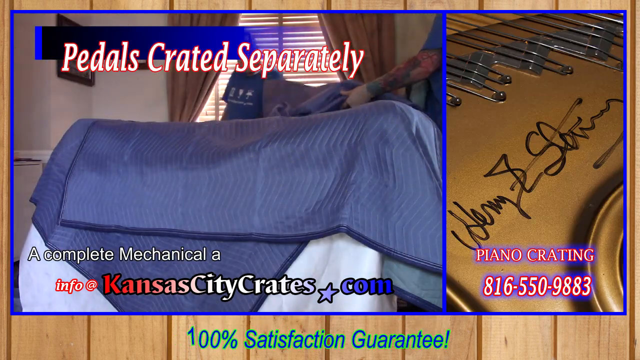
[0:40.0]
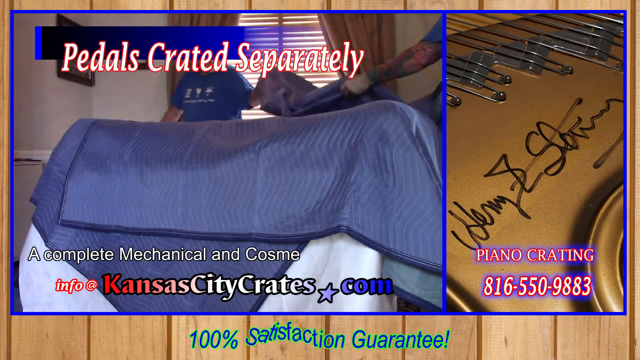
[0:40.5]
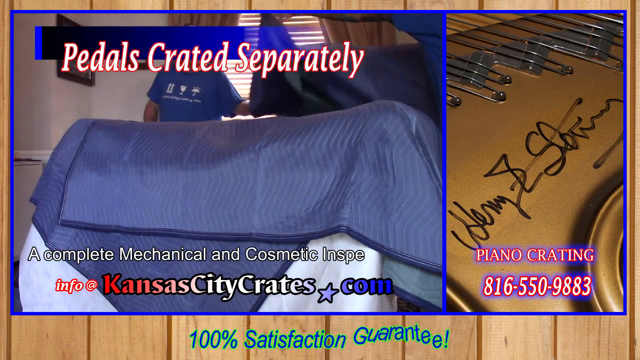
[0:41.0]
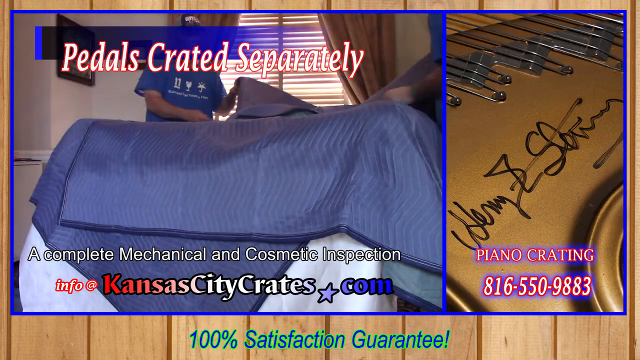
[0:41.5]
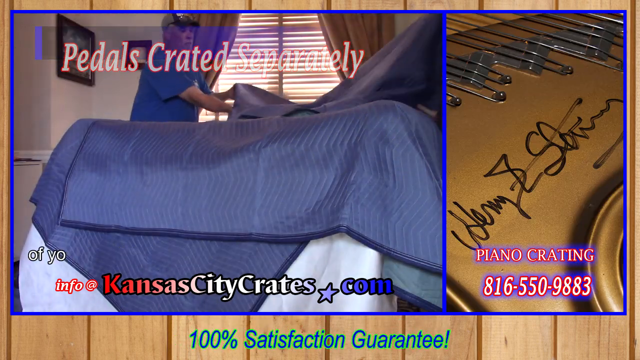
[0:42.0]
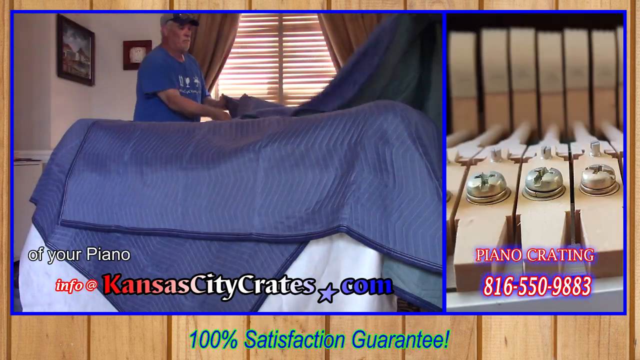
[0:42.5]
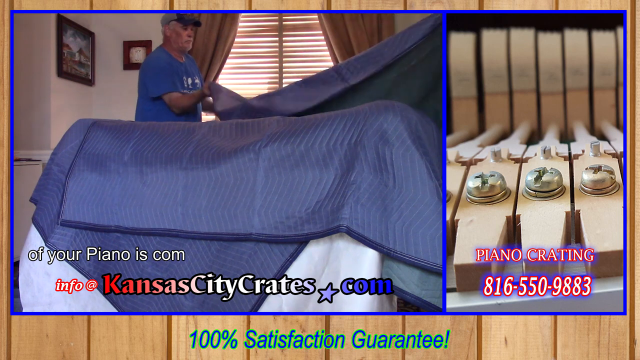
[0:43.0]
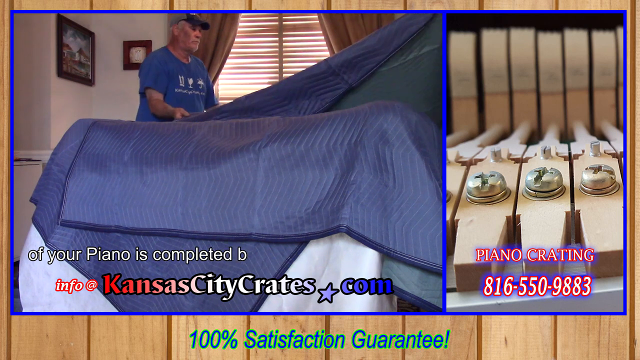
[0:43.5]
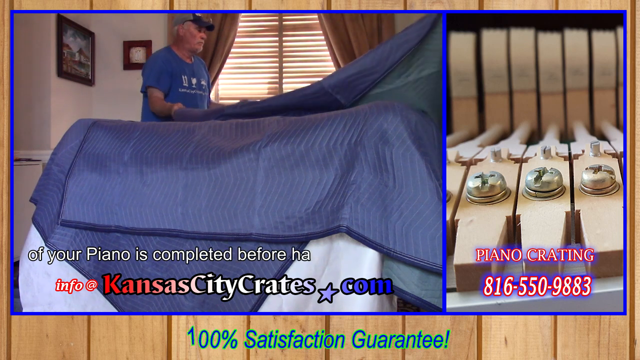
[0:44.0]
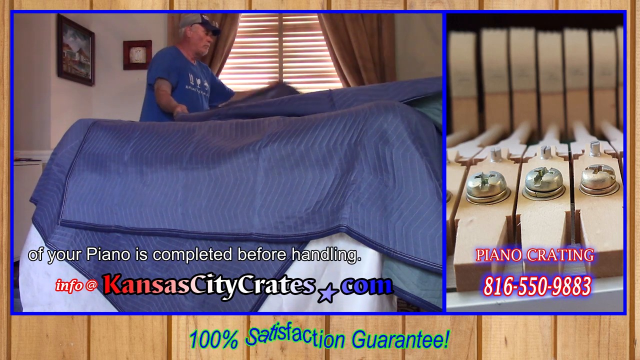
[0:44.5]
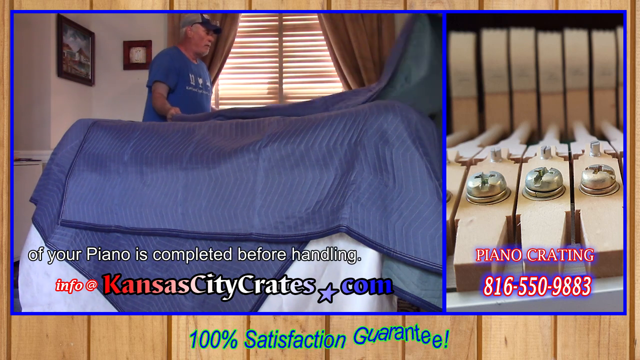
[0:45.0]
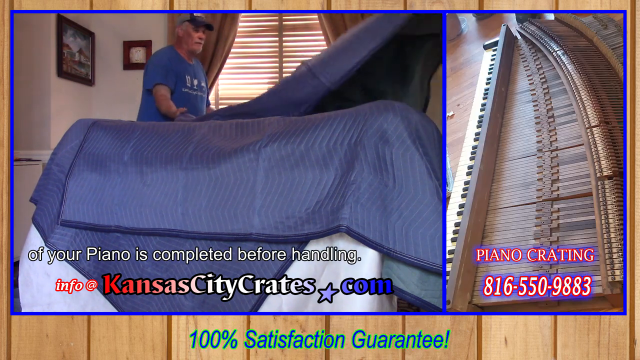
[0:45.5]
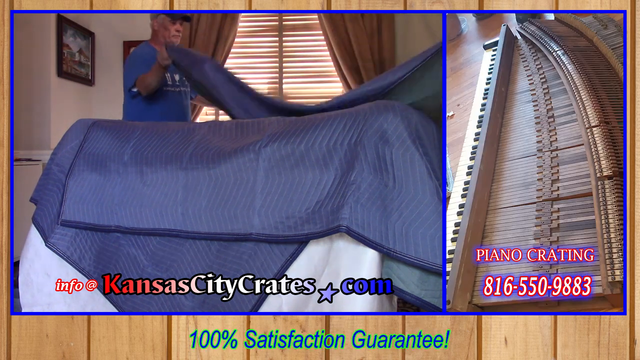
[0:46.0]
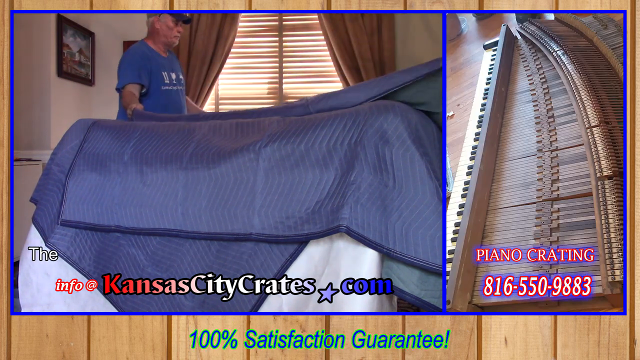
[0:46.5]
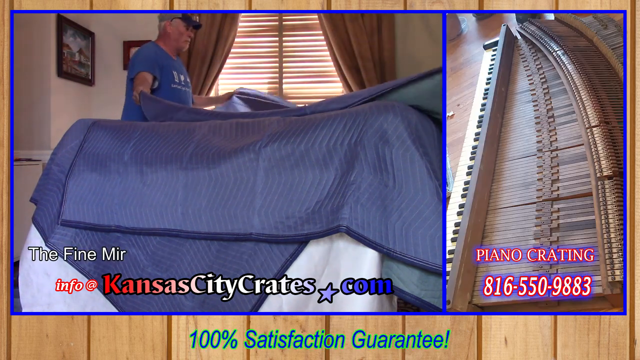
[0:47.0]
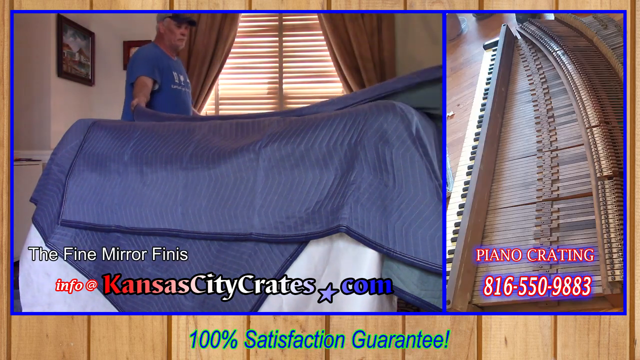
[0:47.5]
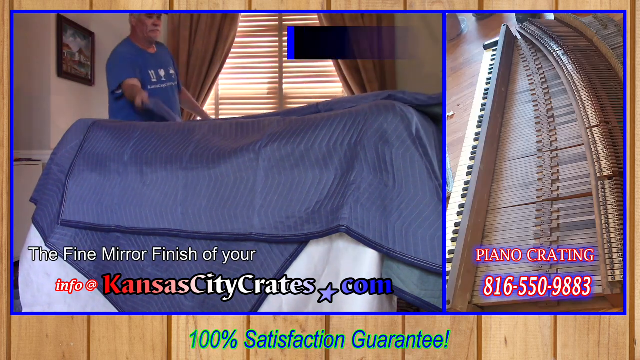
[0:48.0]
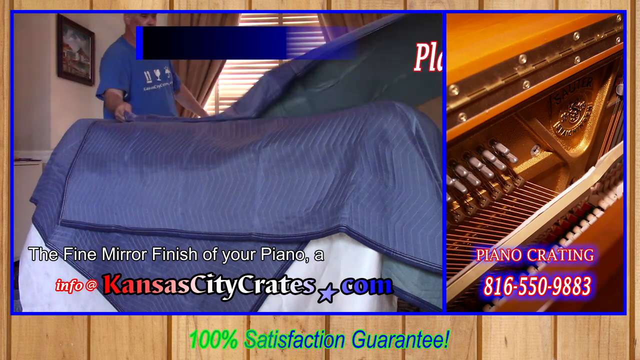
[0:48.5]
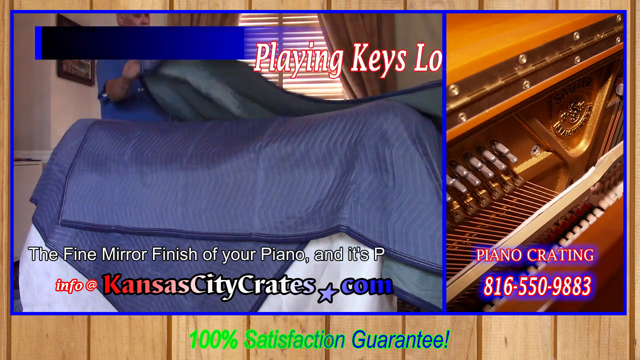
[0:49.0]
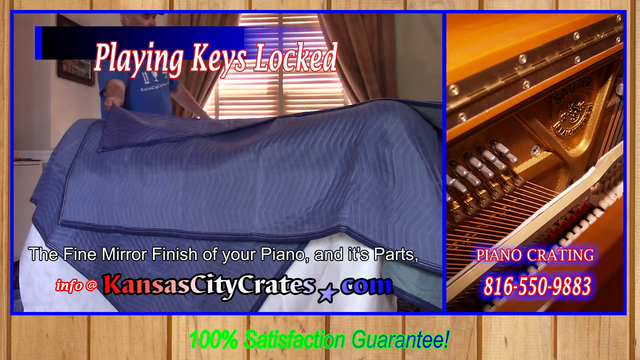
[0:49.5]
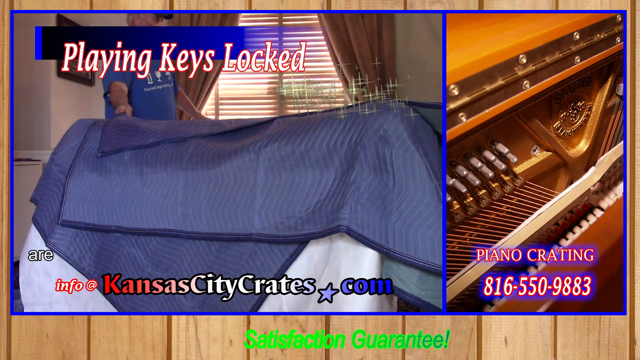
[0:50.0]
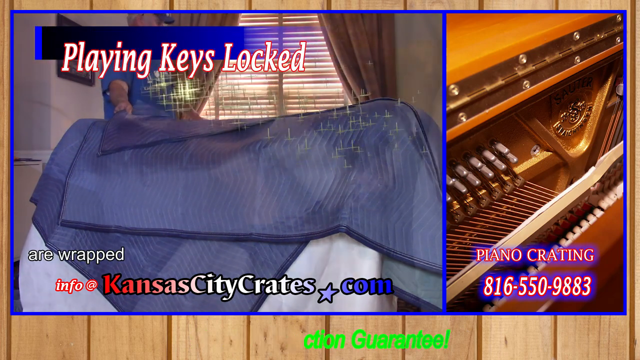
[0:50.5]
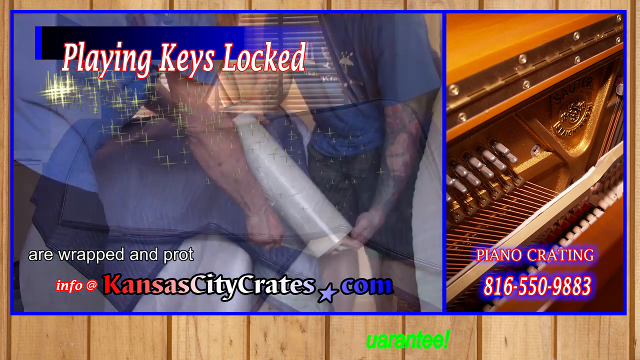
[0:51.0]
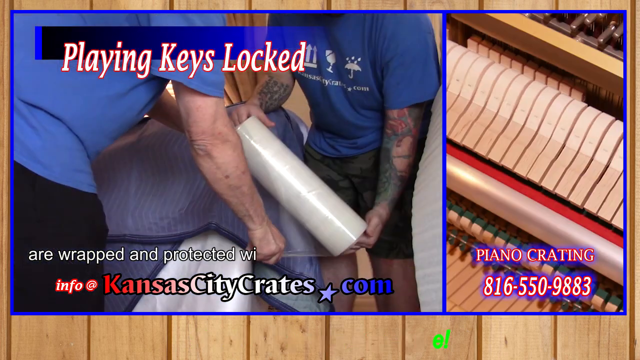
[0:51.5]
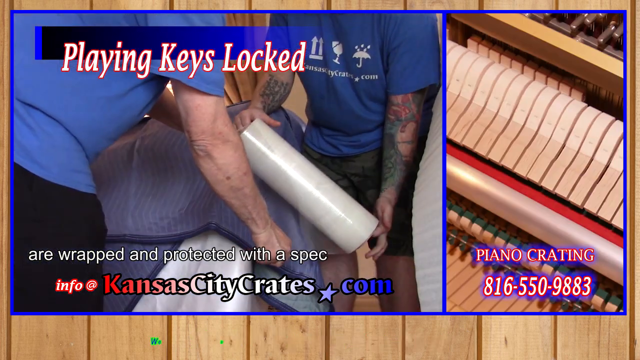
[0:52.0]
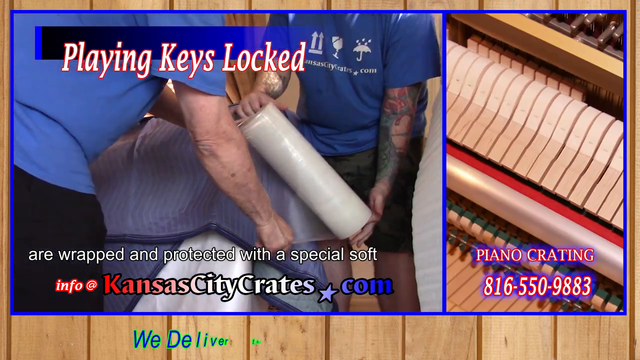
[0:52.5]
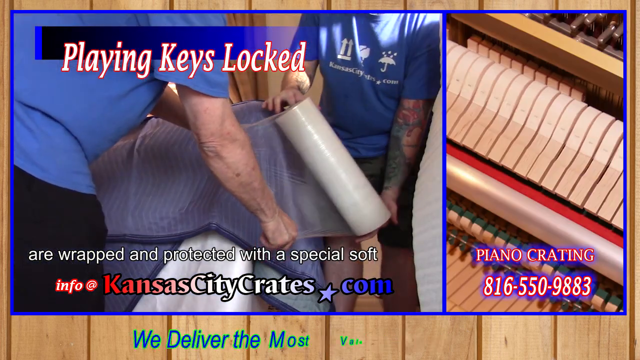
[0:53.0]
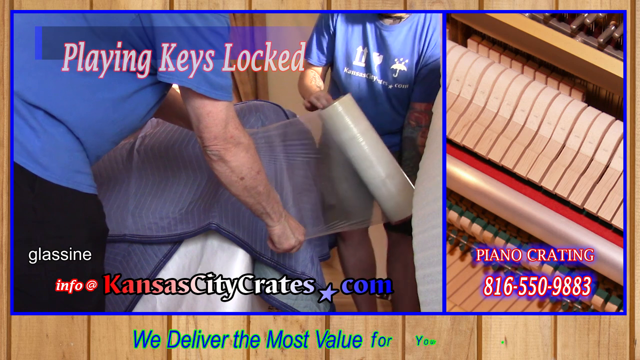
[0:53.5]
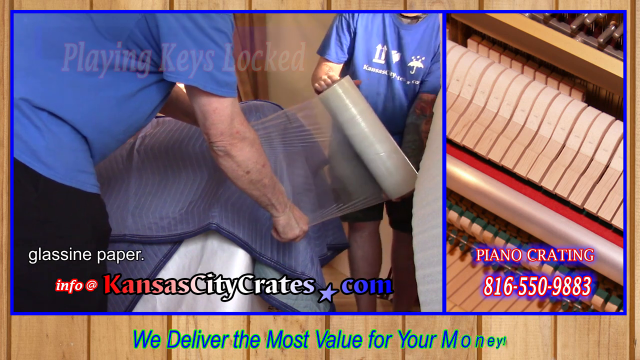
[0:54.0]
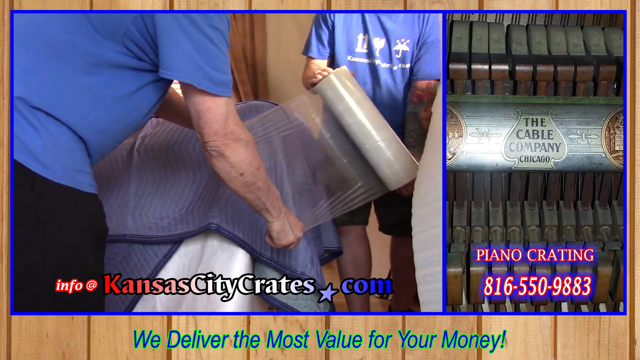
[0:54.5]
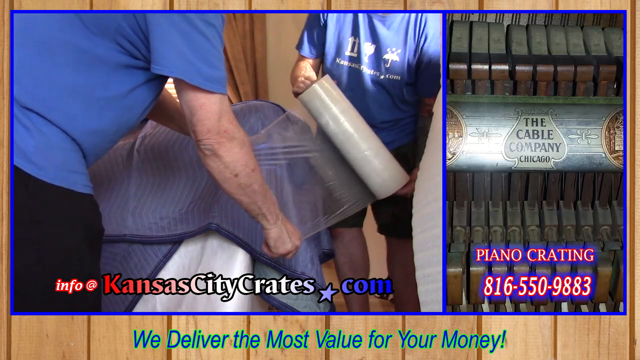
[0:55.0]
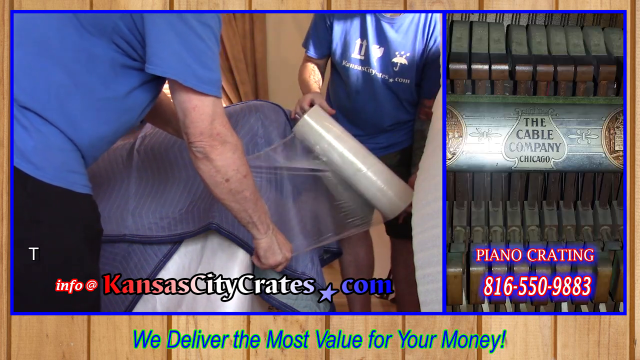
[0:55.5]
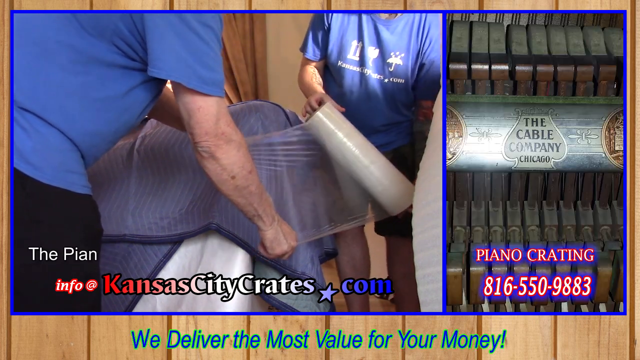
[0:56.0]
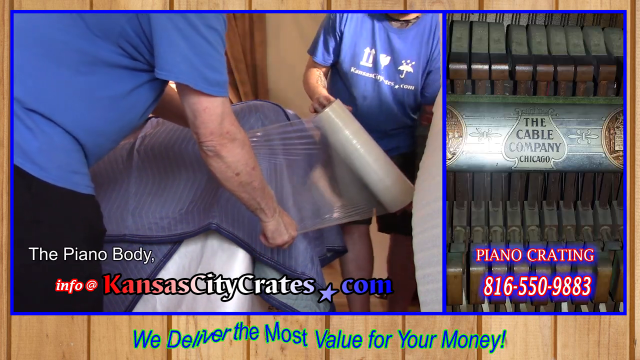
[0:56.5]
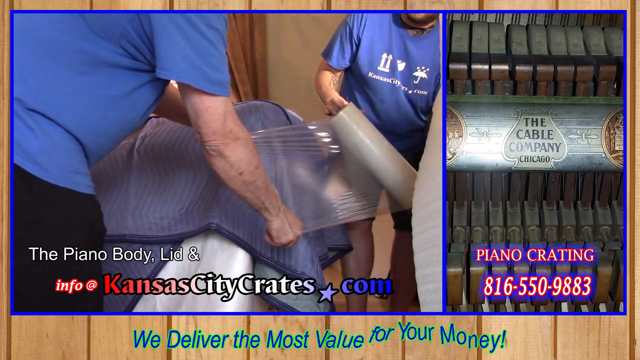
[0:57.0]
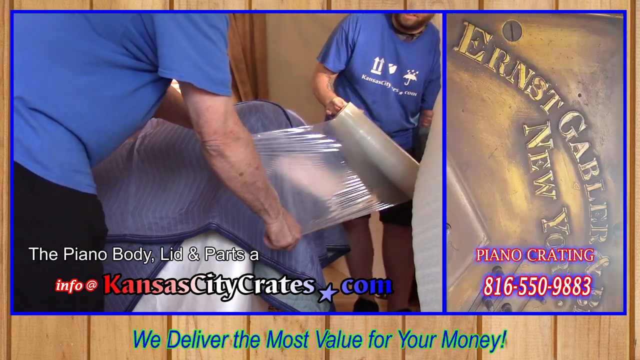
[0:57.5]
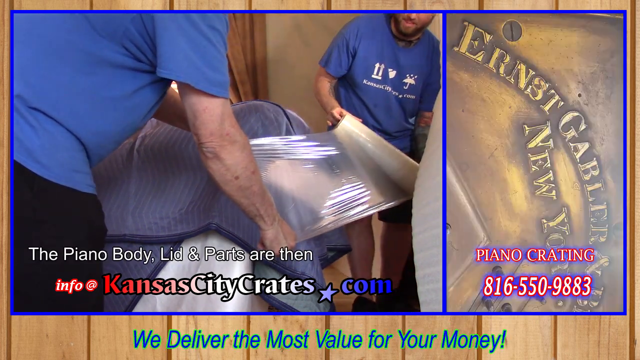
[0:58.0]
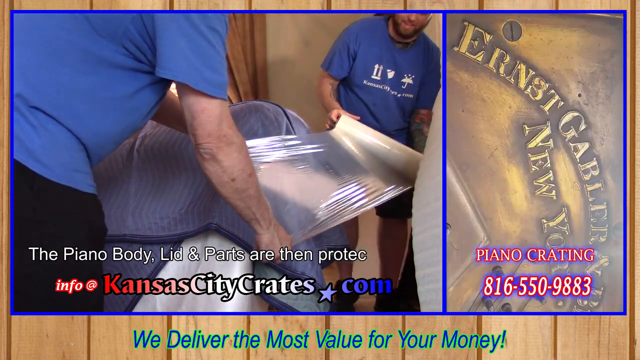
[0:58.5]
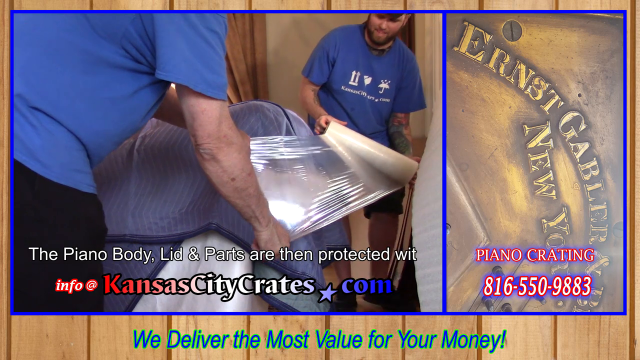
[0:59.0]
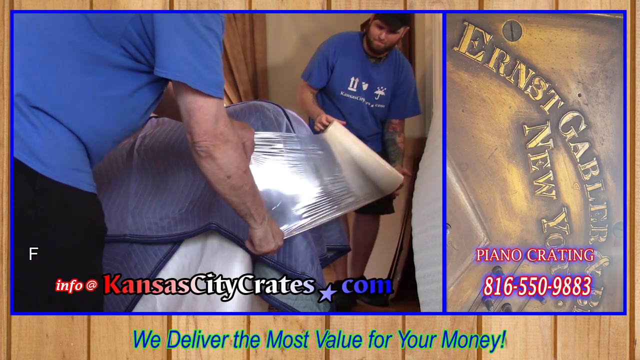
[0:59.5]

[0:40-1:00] The two men, in blue shirts, put more blue blankets on top of the piano. One of them has tattoos all over his arms. Text reads "a complete mechanical and cosmetic inspection of your piano is completed before handling." To the right, while the men put the blankets on, is a picture of the top view of a piano with the words "piano crating" and below them the phone number 816-550-9883. The text on the left continues: "the fine mirror finish of your piano and its parts are wrapped and protected with a special soft glass lined paper. The piano body lid and parts are then protected with furniture paper." Text at the top says the playing keys are locked.